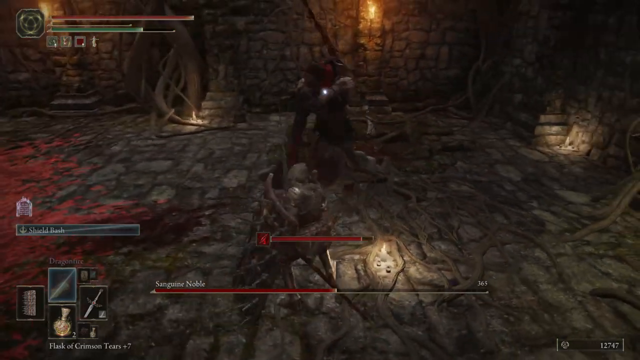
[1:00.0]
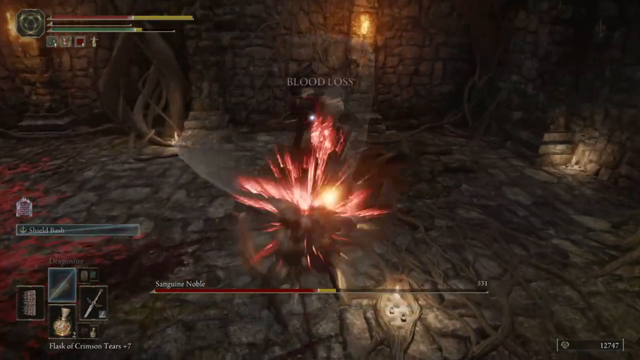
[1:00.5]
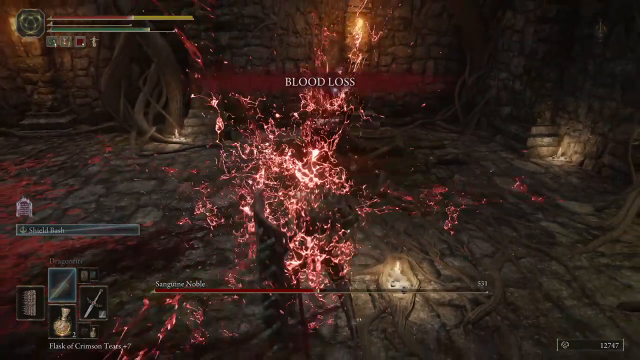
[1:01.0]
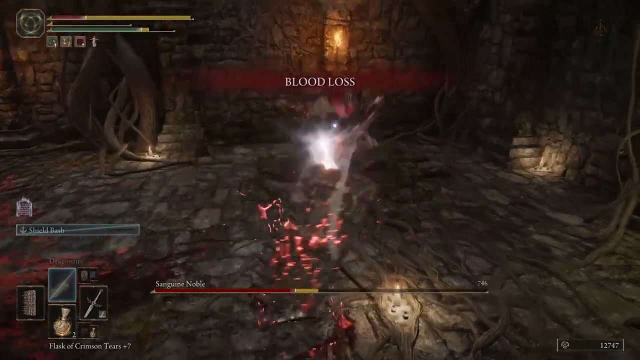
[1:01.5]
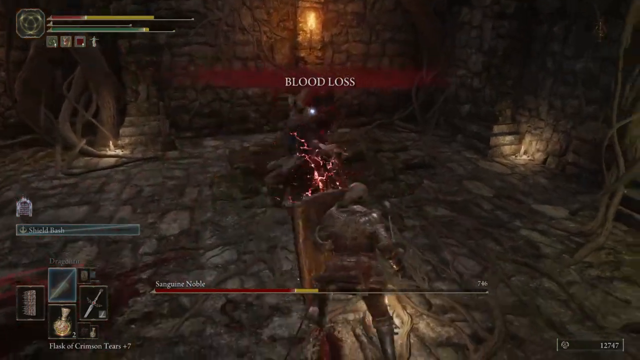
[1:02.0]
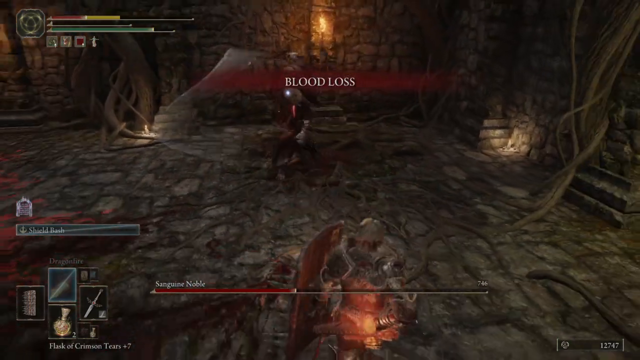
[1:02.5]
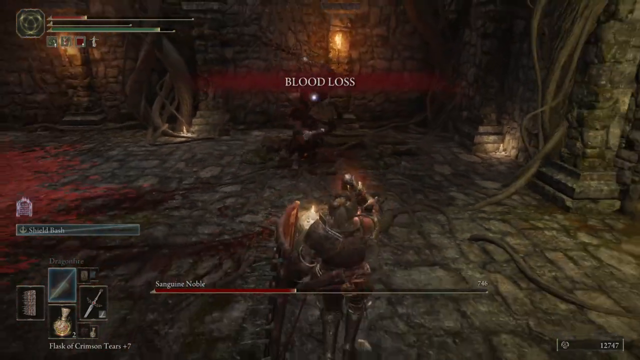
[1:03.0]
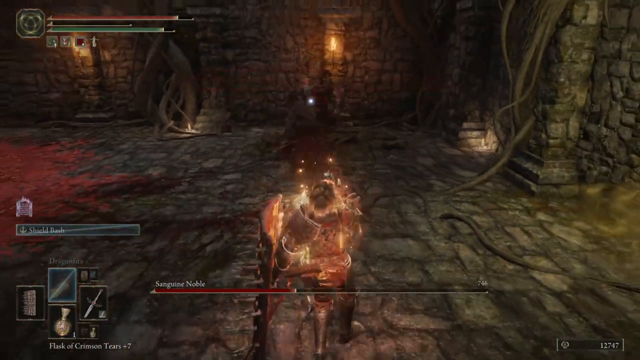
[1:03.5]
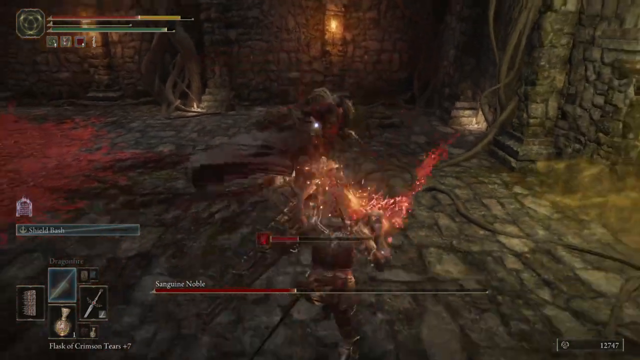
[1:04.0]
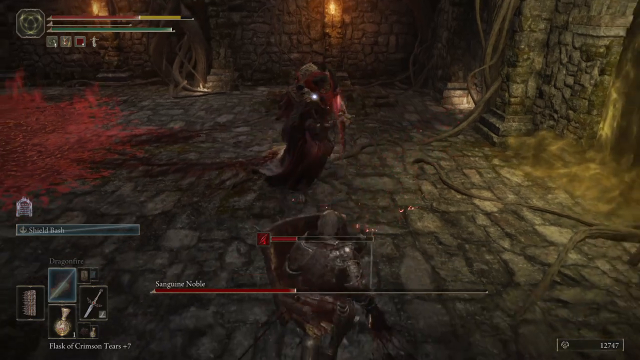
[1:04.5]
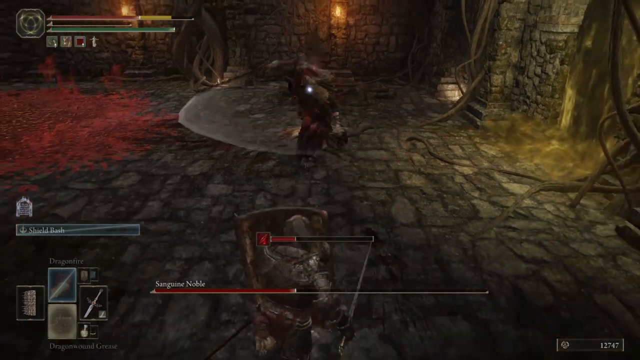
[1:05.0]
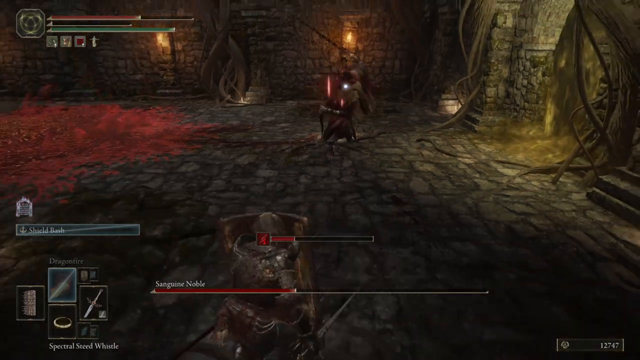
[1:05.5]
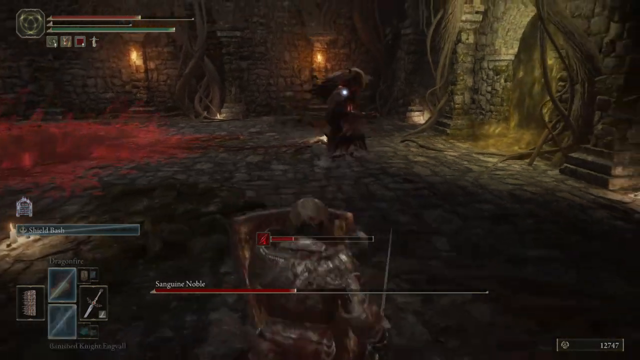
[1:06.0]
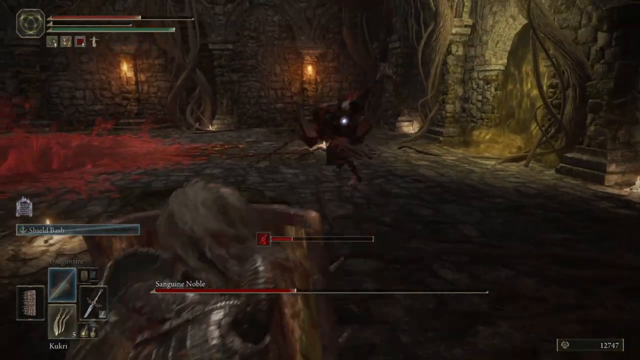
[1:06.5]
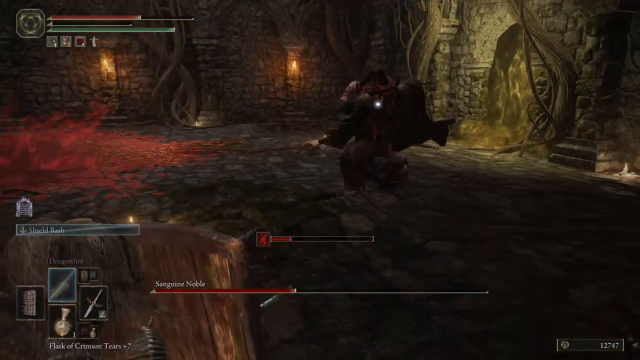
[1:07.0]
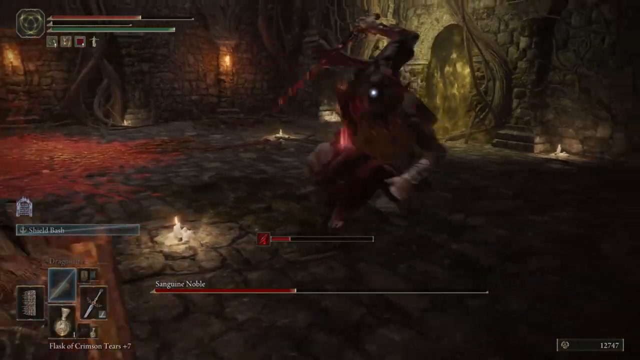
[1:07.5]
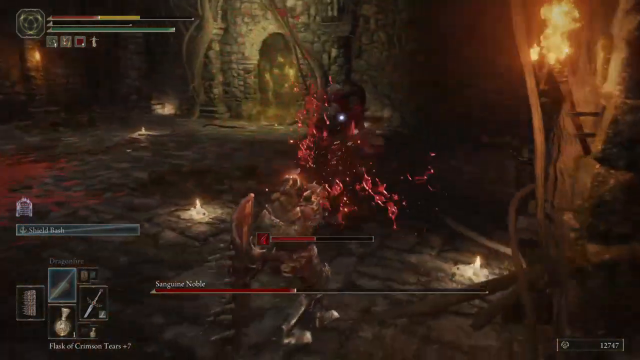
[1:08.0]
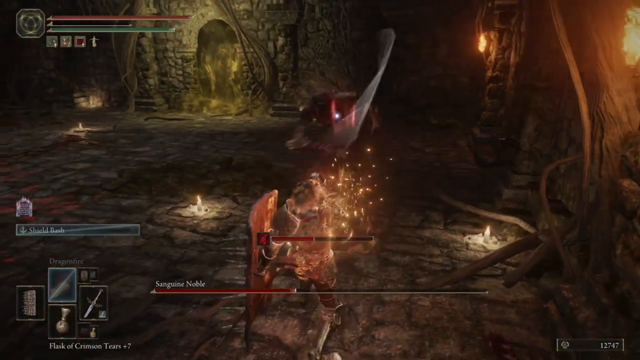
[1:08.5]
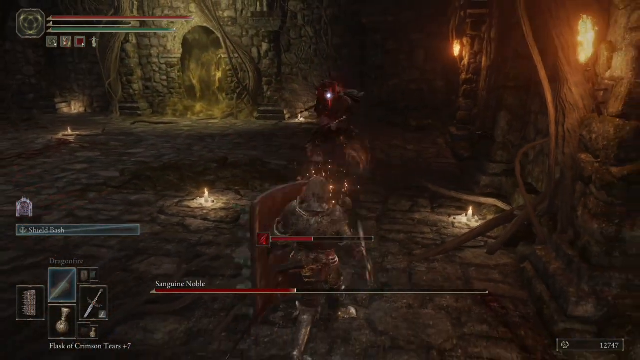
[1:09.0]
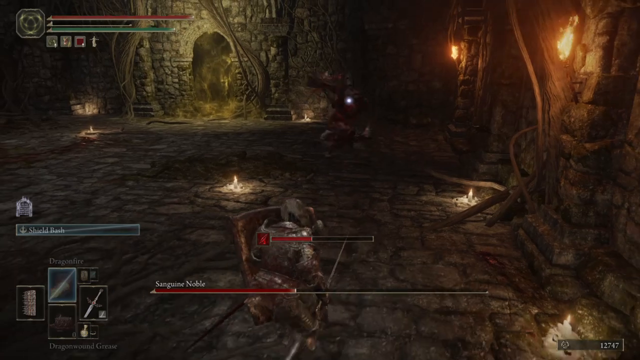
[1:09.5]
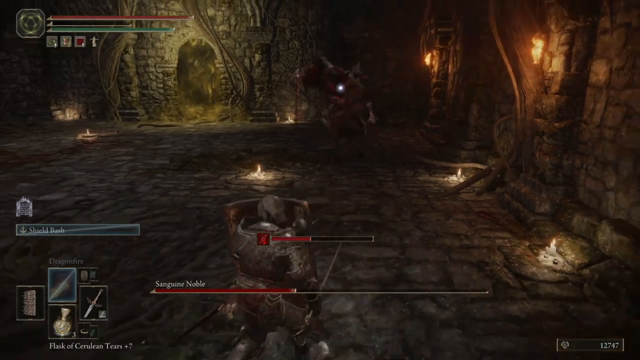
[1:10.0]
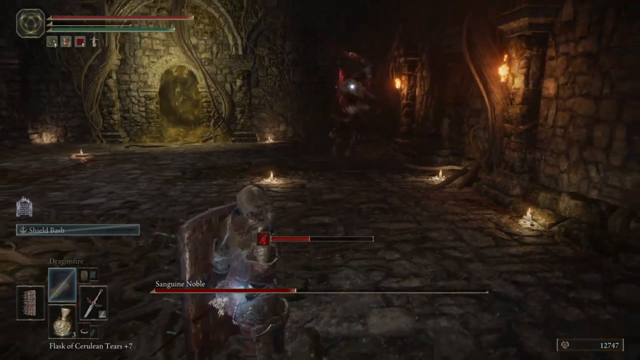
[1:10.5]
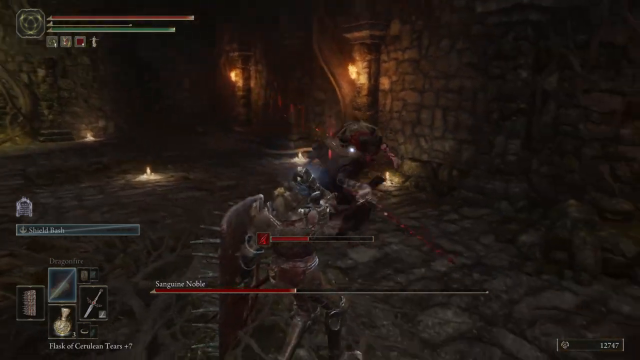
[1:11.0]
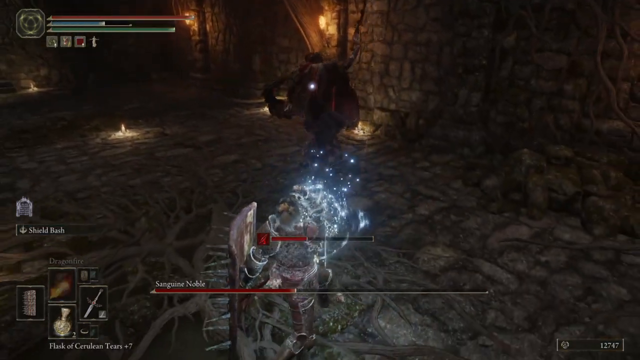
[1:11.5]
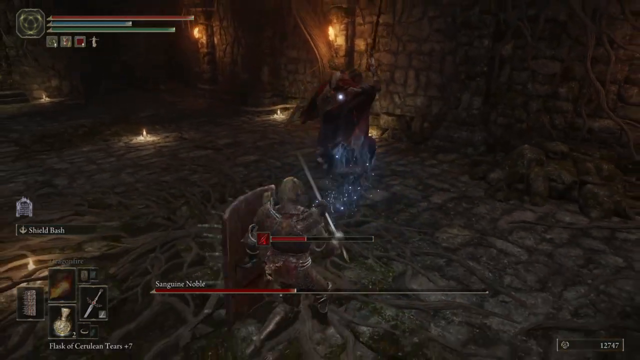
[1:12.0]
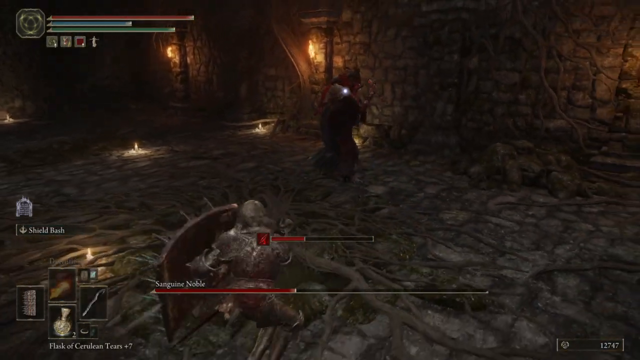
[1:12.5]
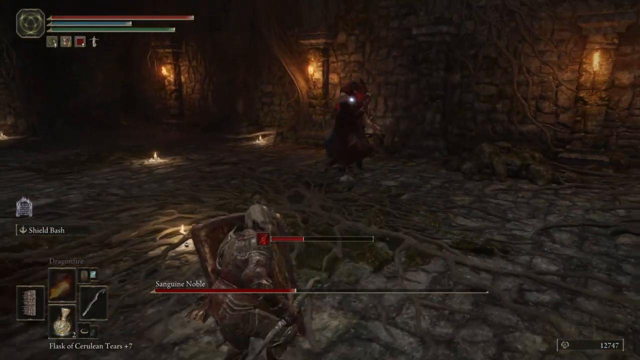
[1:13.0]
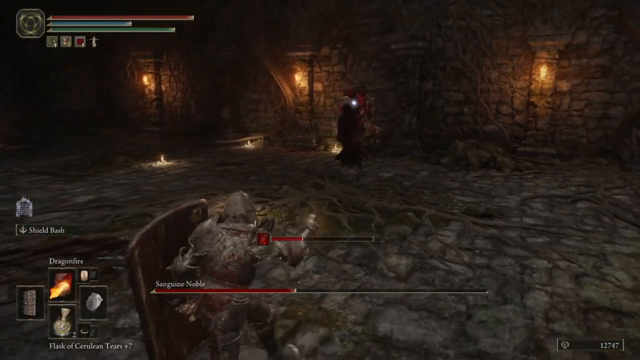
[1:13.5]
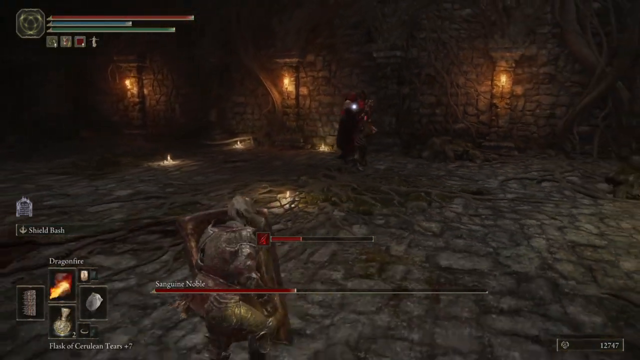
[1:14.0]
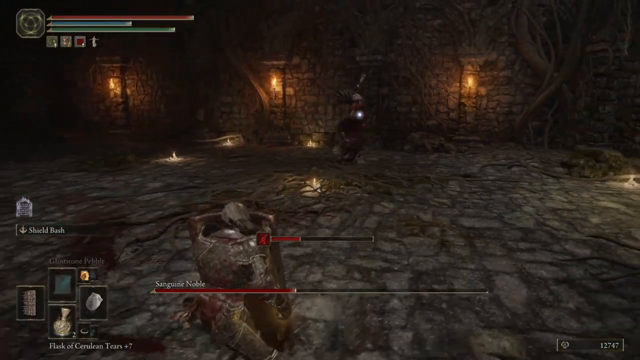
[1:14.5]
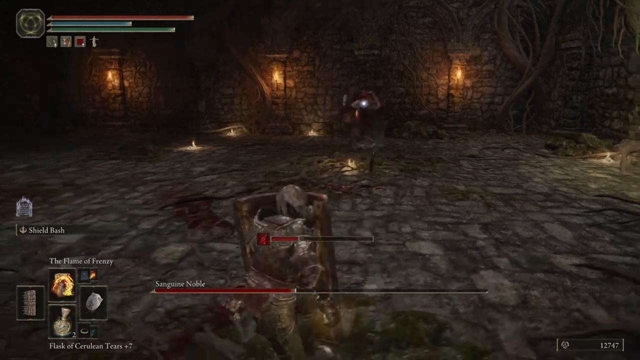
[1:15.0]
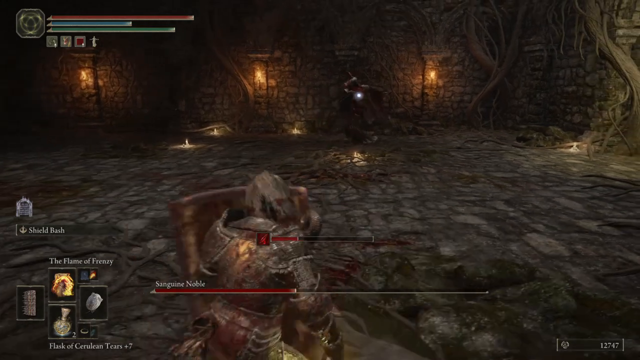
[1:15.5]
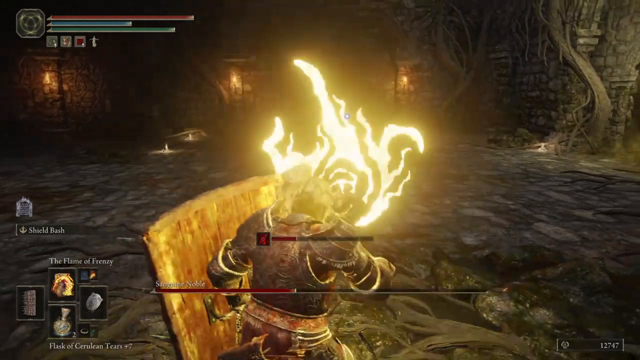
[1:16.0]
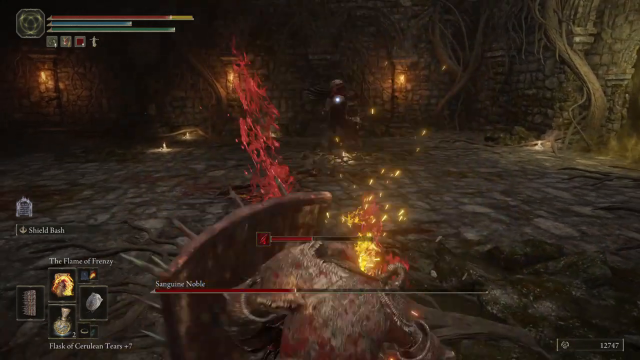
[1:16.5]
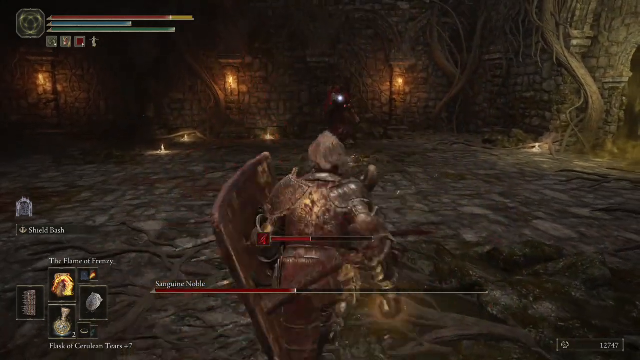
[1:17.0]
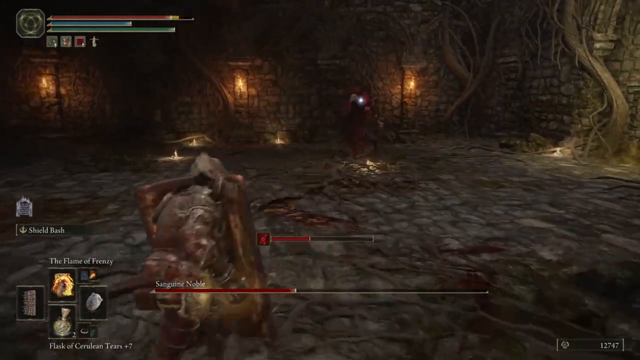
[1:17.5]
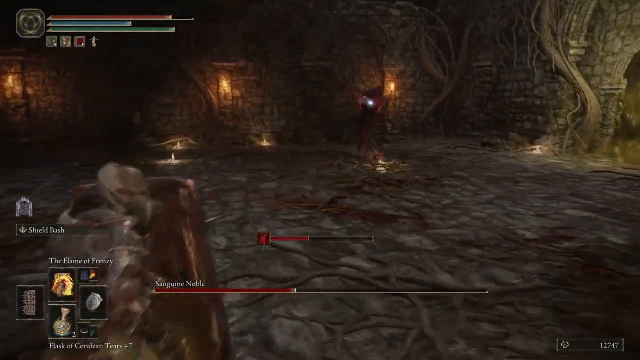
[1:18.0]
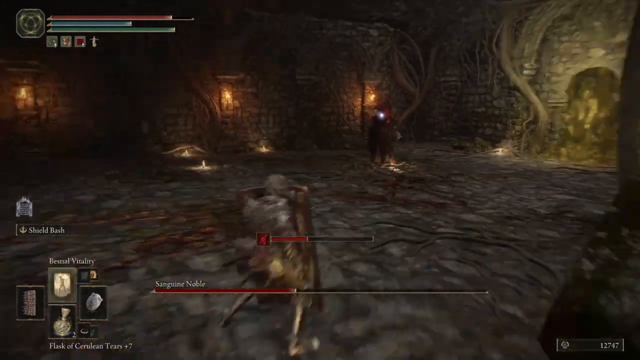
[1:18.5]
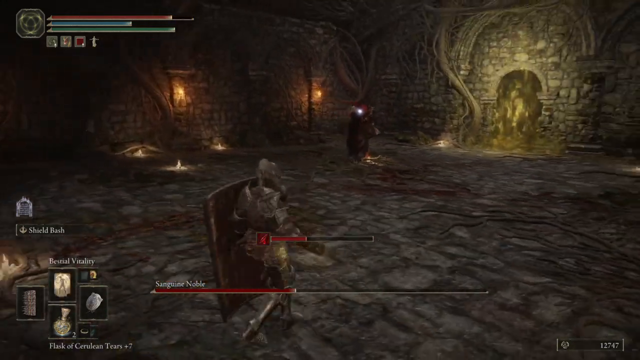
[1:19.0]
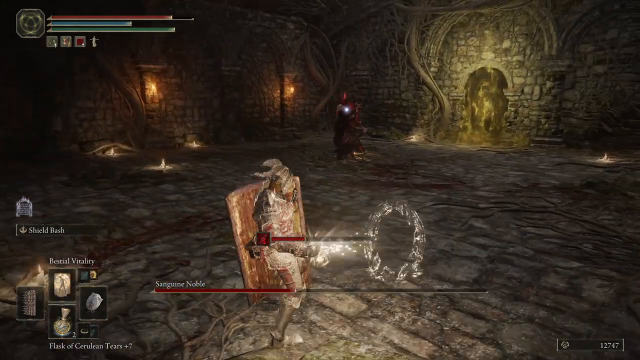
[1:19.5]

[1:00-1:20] The character is hit with a super heavy sword attack, and the red text box with big white all-capital letters reading "blood loss" appears at the top center of the screen. The health bar drops drastically, then goes back up as the character keeps sipping potions, each time with a glowing aura all around him as his health regenerates. Under the health bar there is another, blue bar, which one of the potions refills; it is possibly a stamina meter or perhaps a gauge for some magic ability.